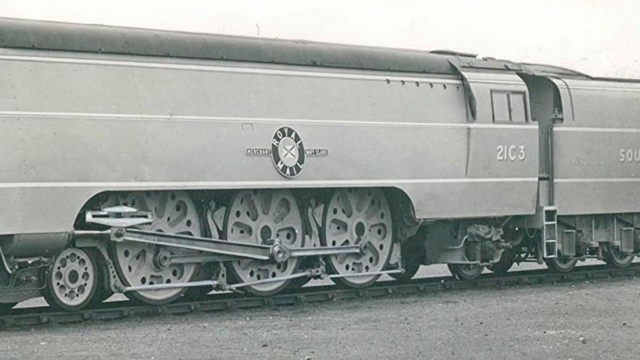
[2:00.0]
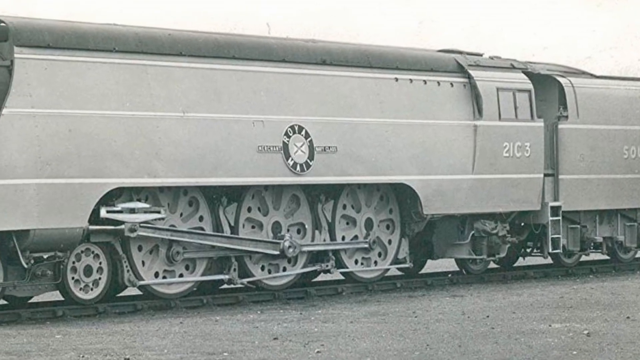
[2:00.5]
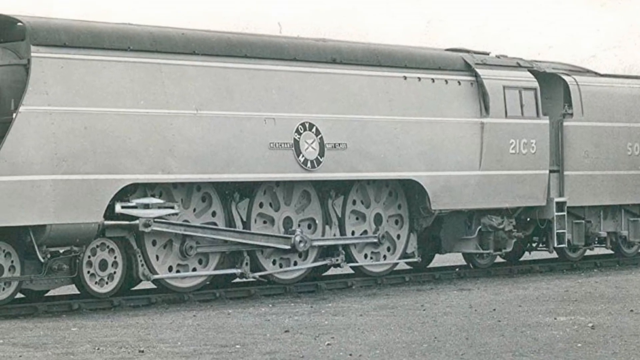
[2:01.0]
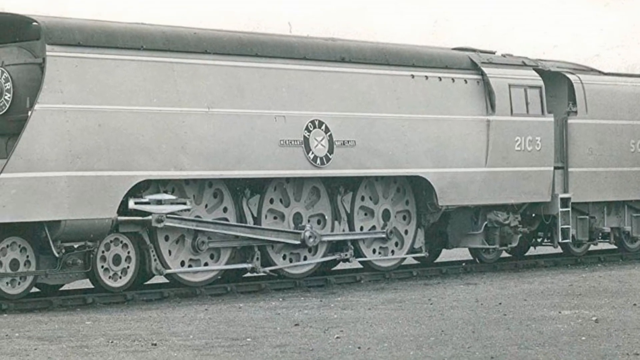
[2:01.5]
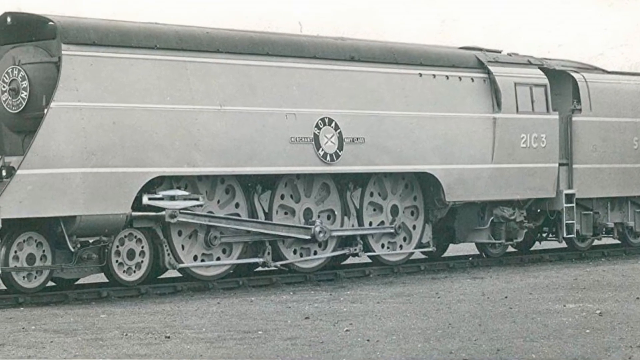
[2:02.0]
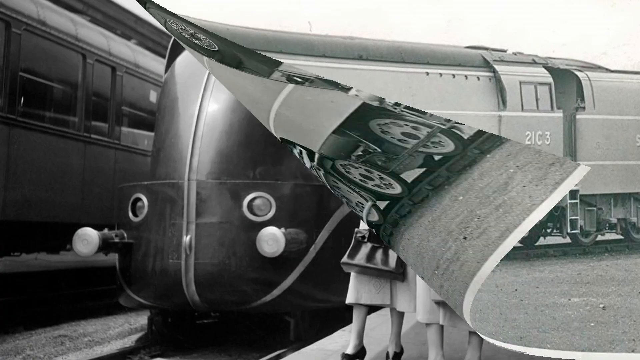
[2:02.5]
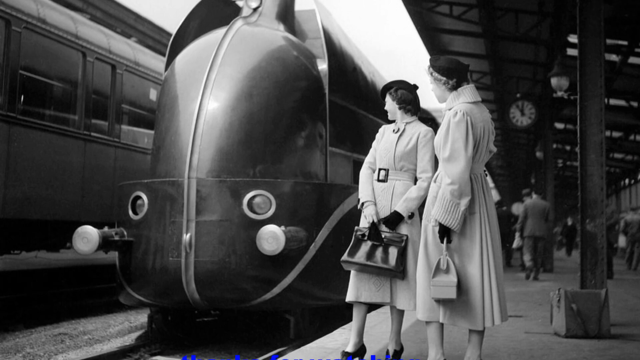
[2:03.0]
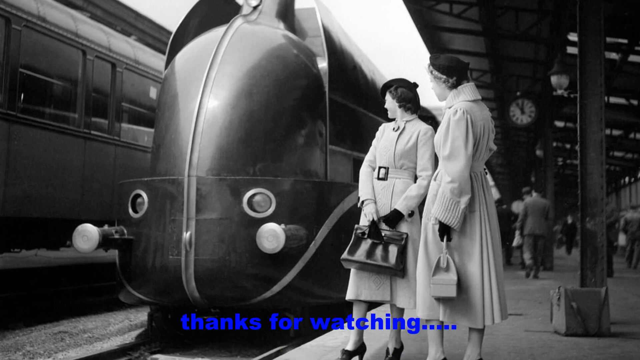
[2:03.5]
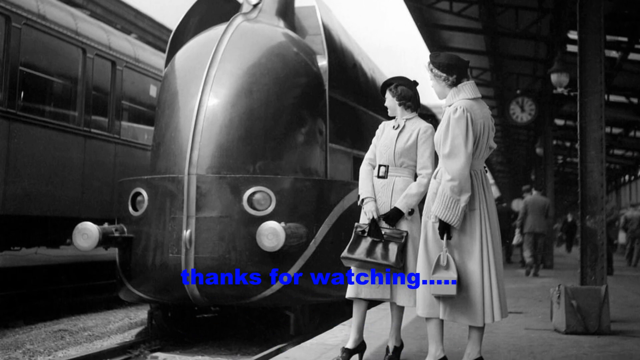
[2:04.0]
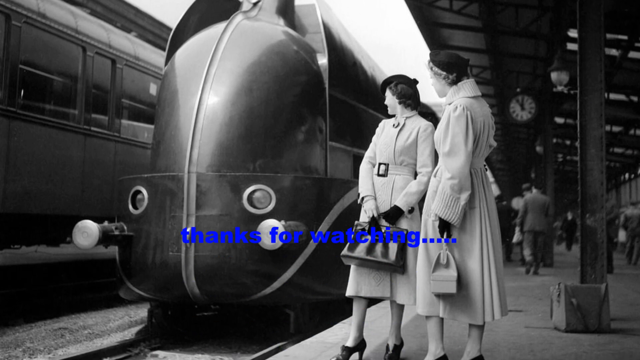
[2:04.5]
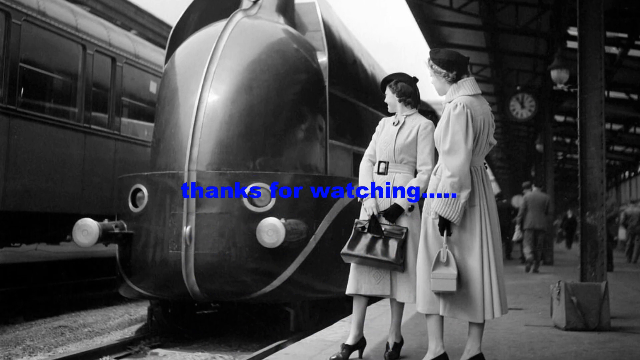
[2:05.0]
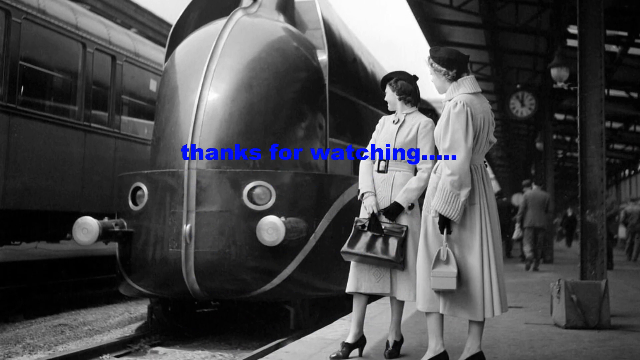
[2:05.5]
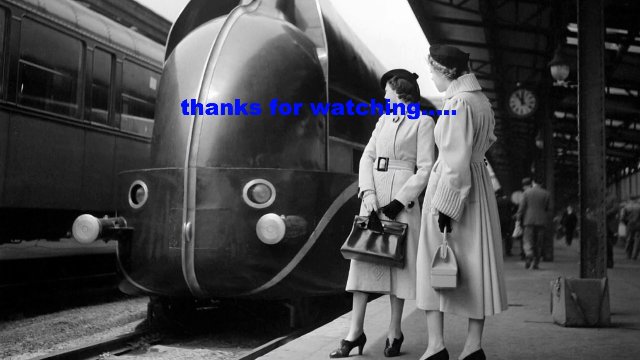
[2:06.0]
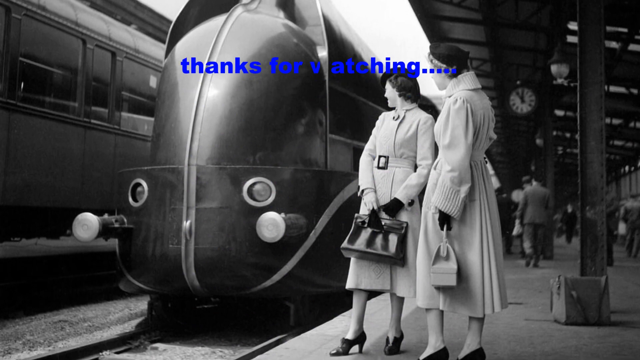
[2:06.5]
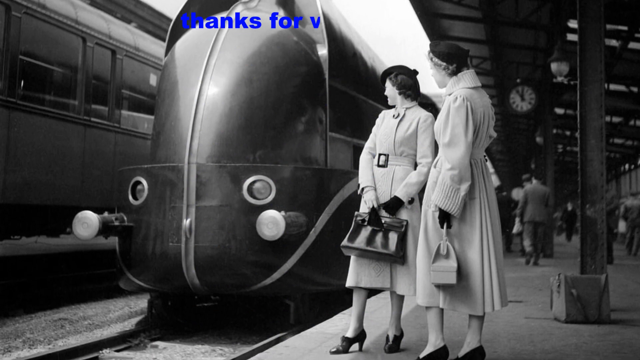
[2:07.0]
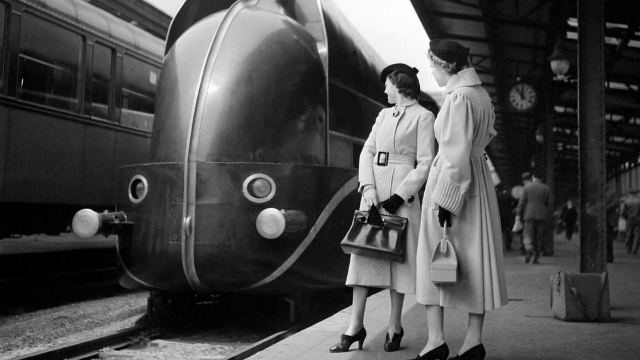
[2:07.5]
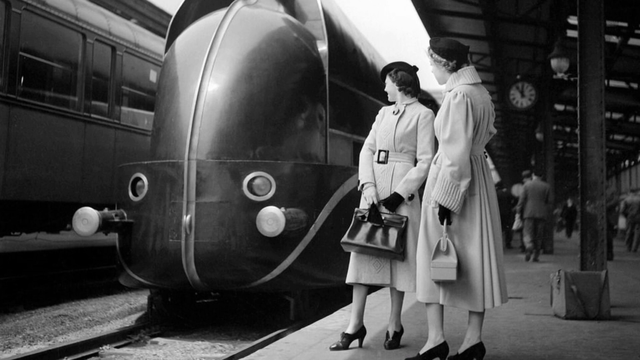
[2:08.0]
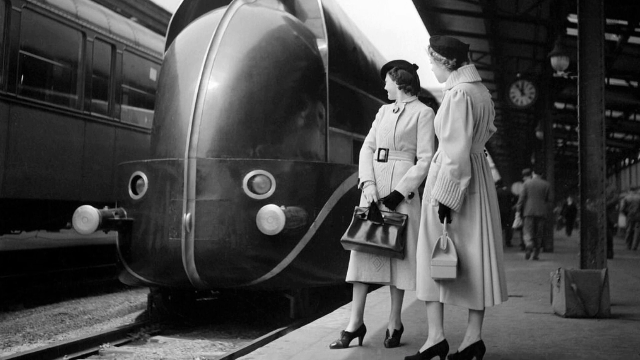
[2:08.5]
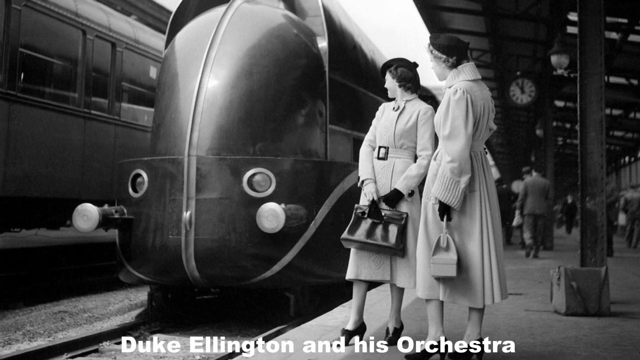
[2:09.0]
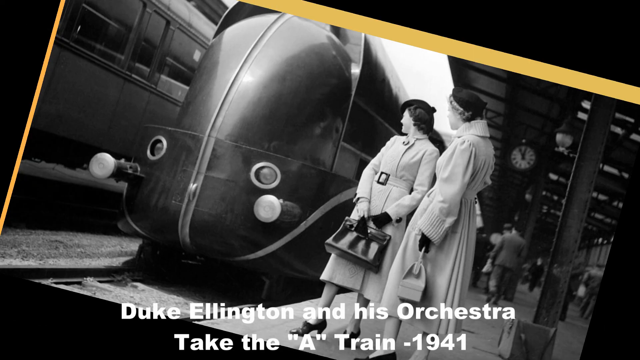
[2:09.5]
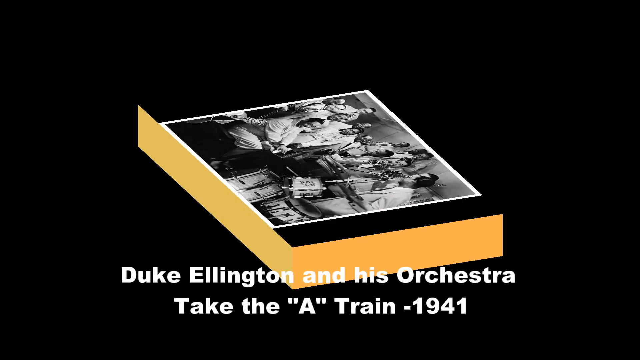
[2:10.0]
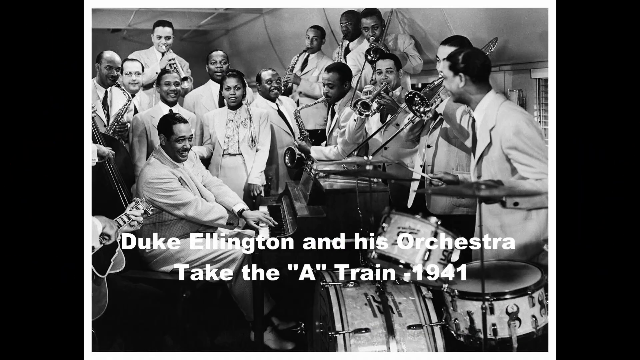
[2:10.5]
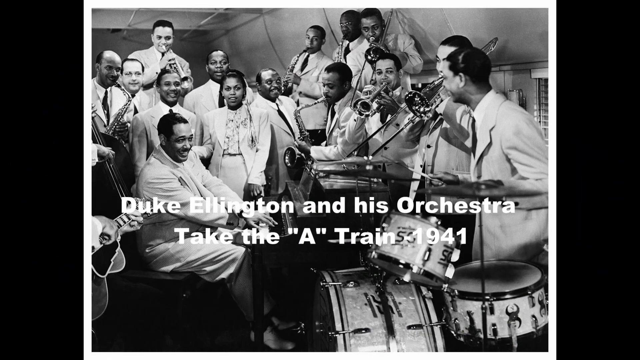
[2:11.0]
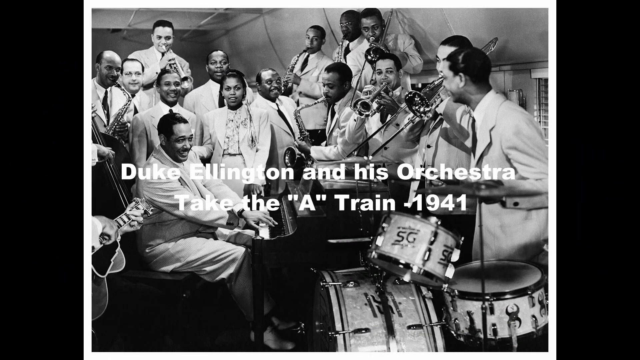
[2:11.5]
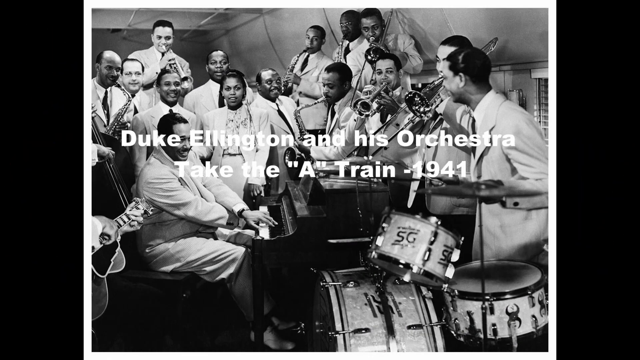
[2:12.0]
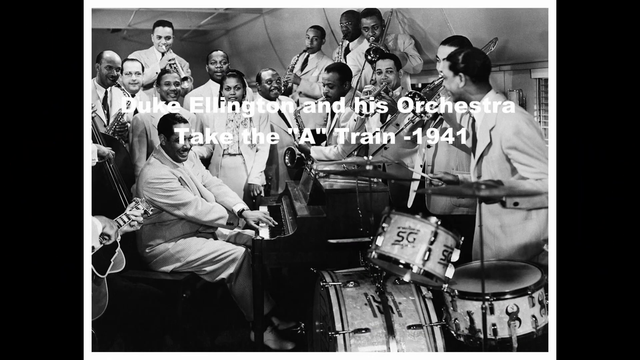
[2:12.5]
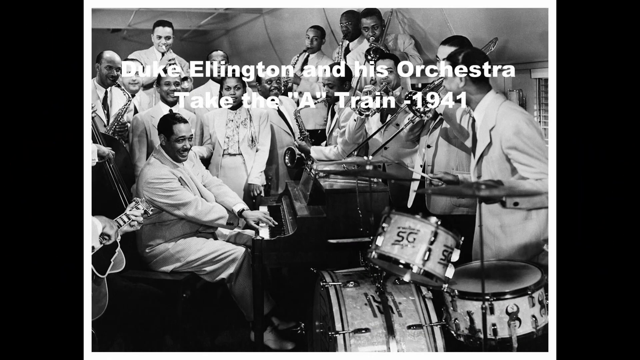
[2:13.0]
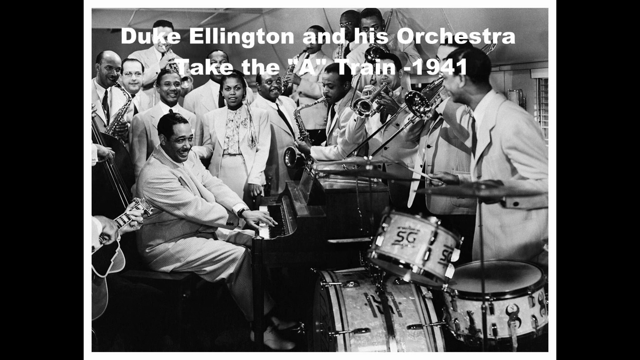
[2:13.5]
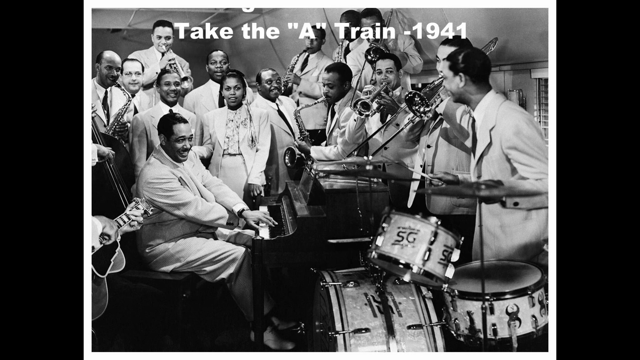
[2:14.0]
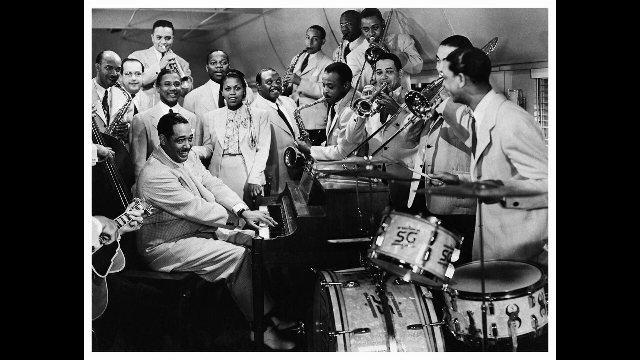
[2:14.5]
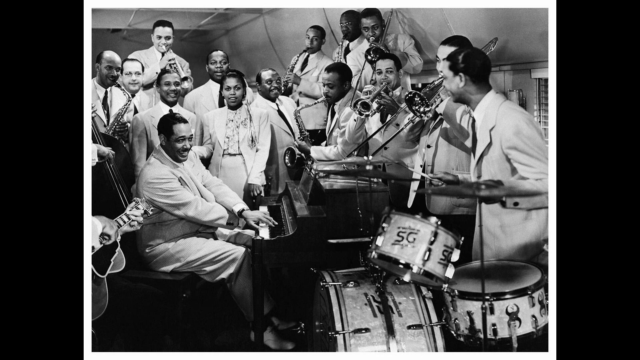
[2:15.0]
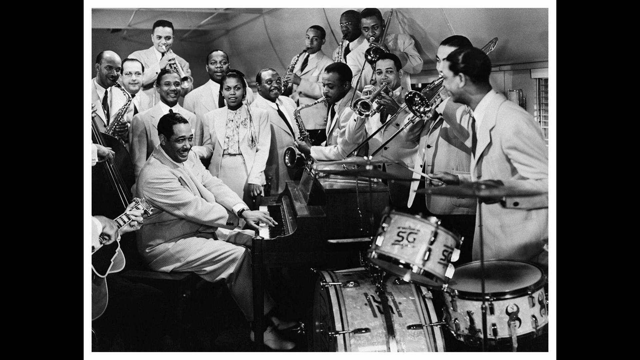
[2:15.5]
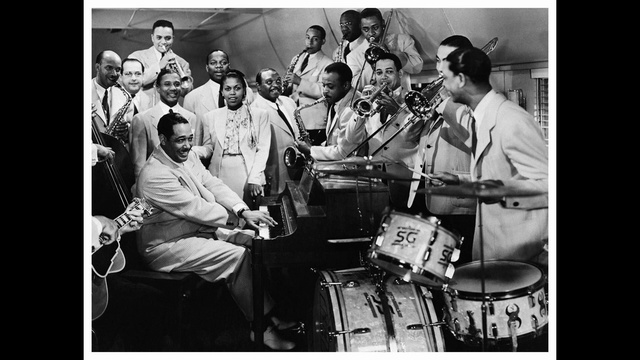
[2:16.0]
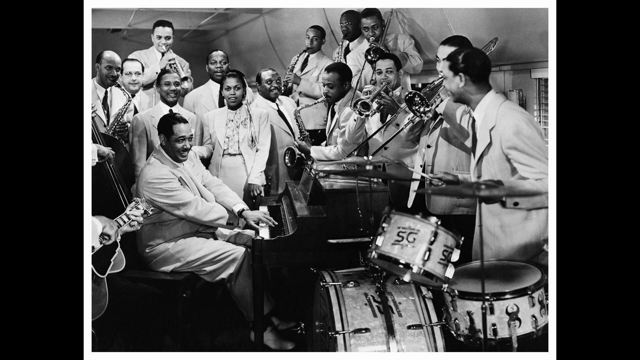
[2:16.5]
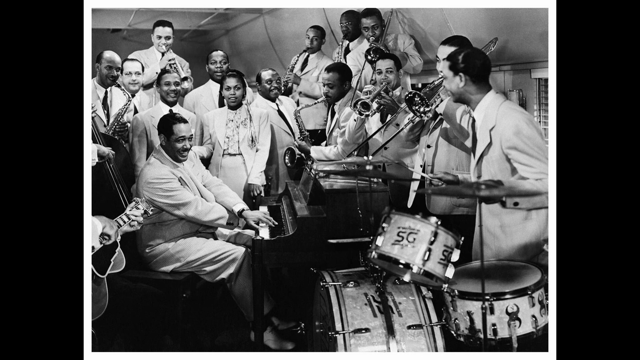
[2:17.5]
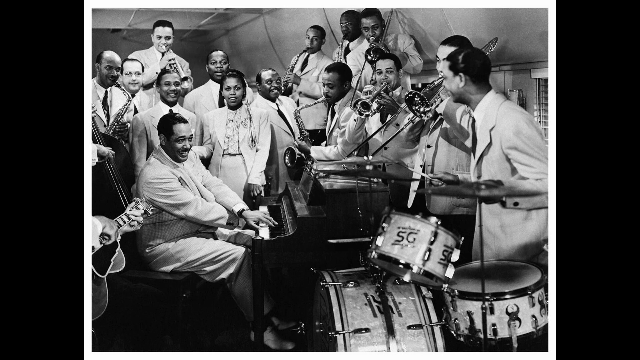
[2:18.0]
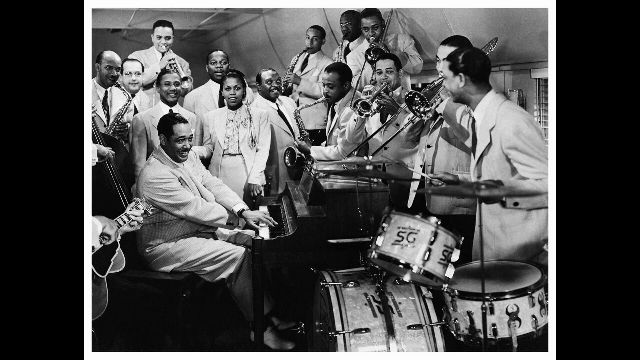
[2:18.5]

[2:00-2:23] A black and white image shows a Royal Mail steam engine, so its colour cannot be seen. Next is an image of two women on a platform wearing black hats and what are presumably white long jackets, standing at the front of an unusual-looking train and both looking at it in apparent awe or admiration. People mill about on the platform behind them, and a clock shows 11 o'clock. Text appears on screen that says "Duke Ellington and his orchestra, take the A train", followed by a photograph of Duke Ellington and his orchestra with piano, guitar, trumpets and drums, the first image in the video without a train. Text then says "Thank you for watching".